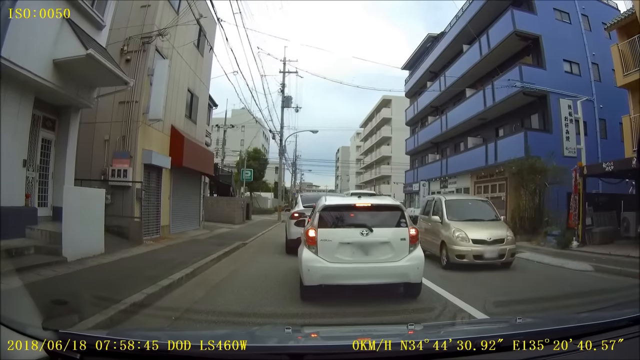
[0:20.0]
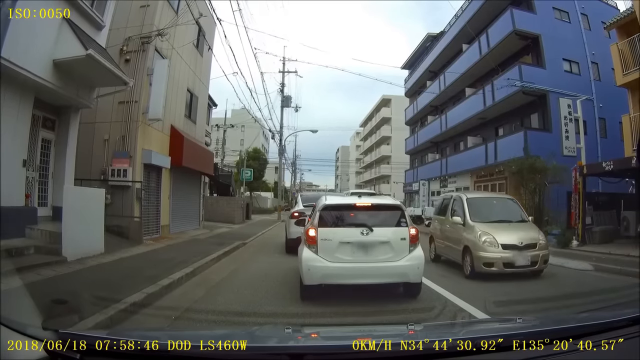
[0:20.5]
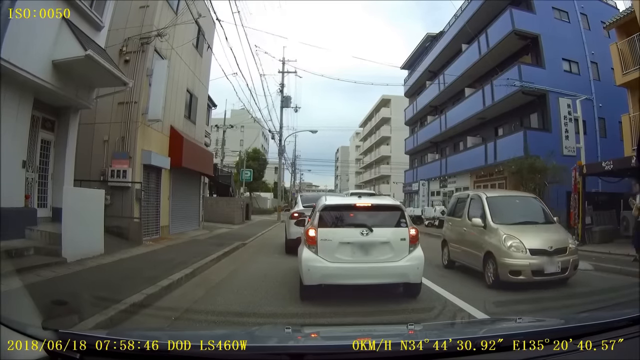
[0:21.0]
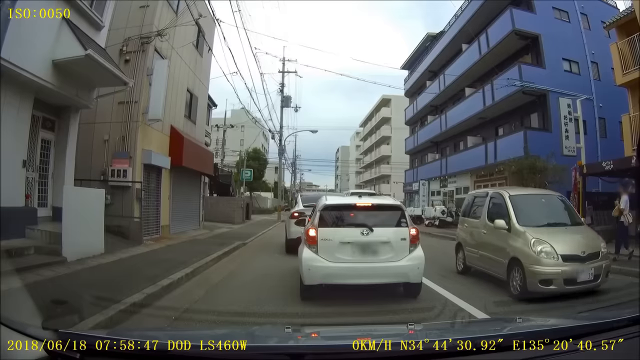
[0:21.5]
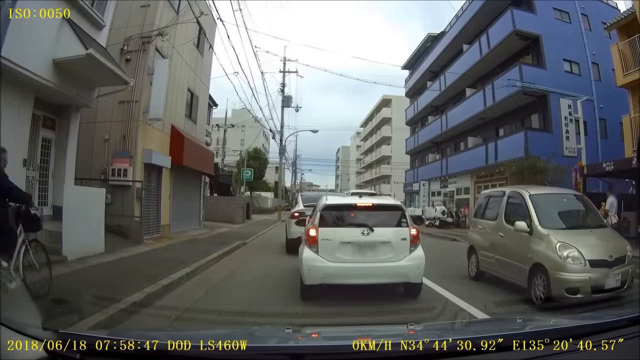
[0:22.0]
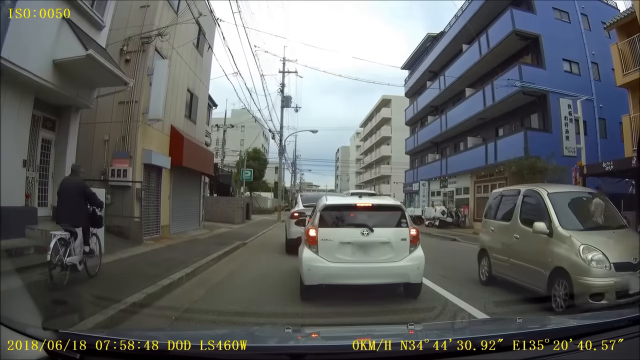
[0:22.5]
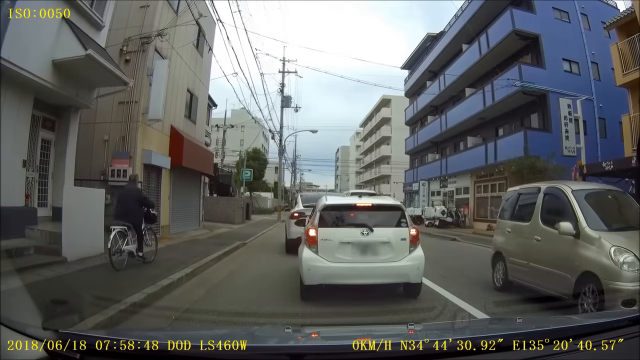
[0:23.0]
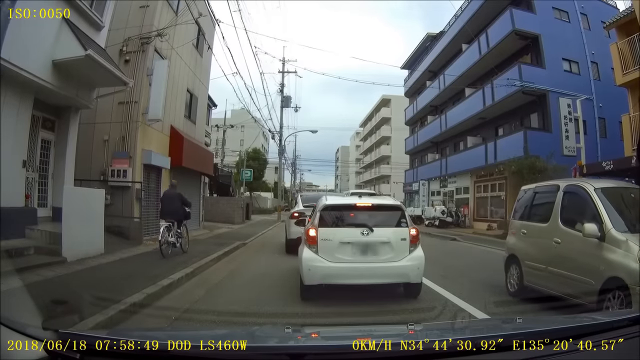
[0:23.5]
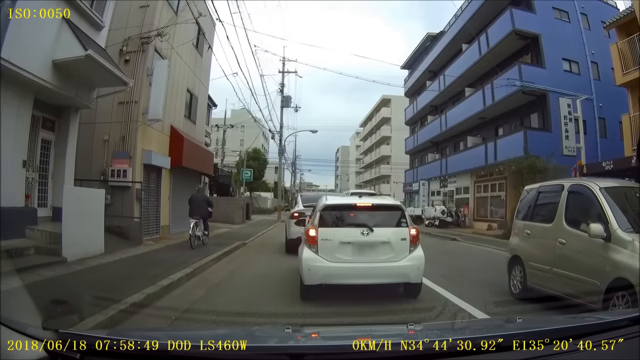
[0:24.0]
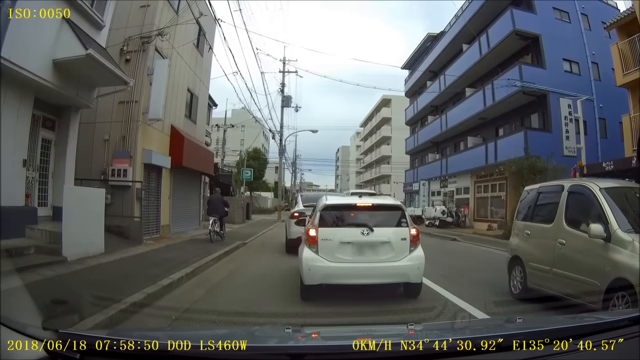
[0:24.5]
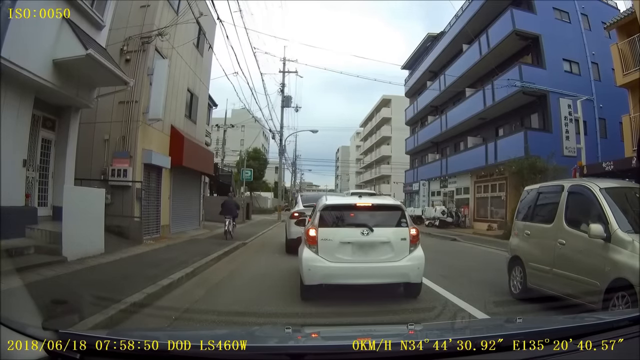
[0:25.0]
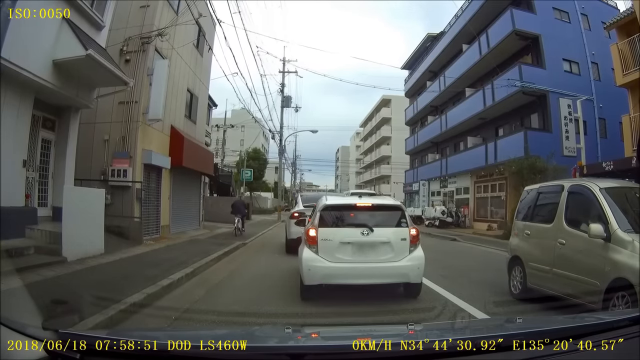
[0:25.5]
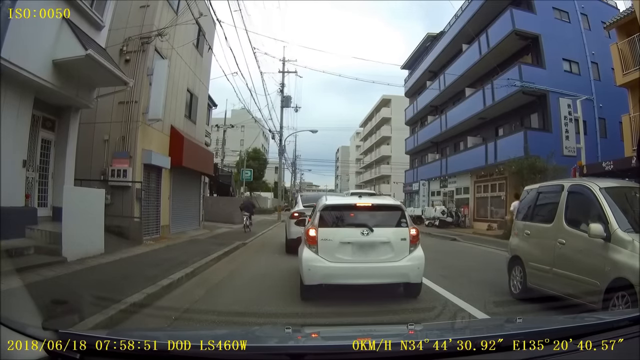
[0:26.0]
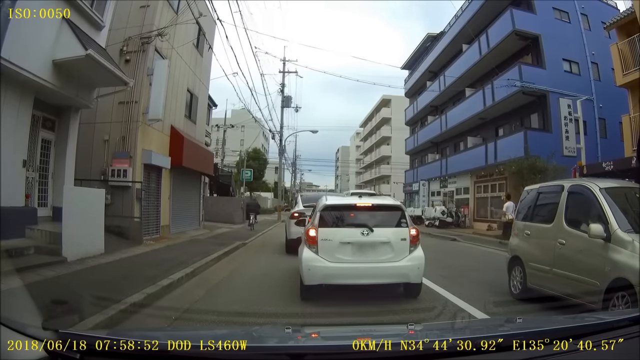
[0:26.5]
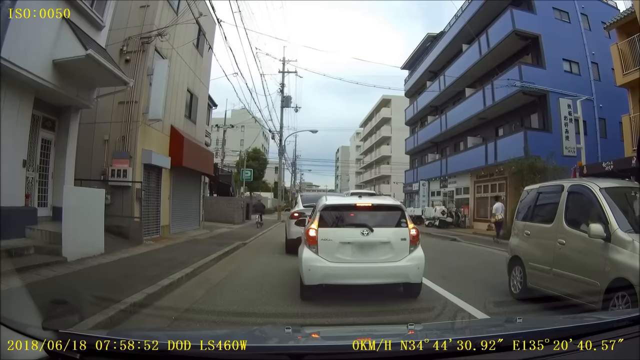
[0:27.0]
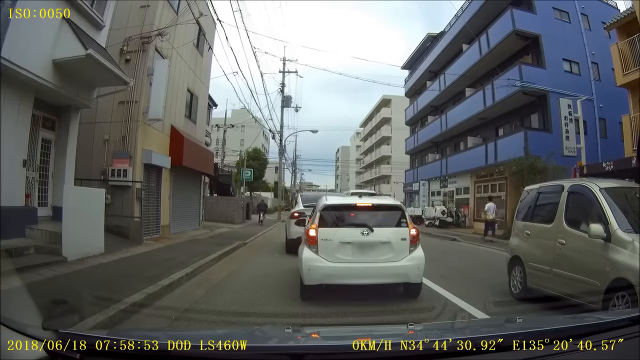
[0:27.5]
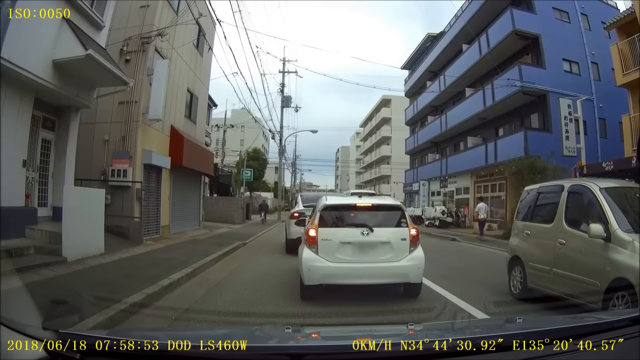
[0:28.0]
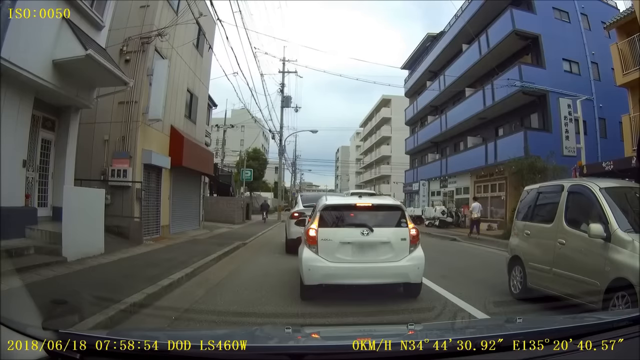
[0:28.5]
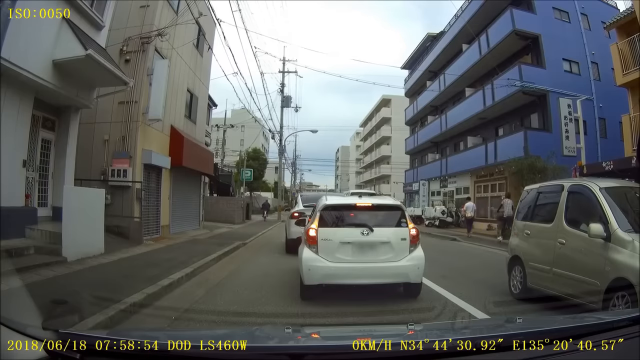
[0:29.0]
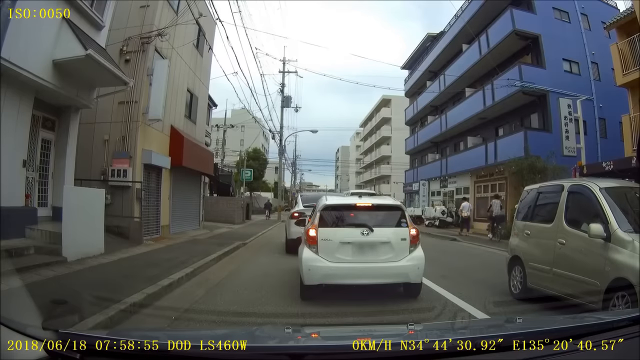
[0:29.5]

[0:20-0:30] Various cars are stuck in traffic in a region of Japan, unable to move because they are held in place in one area. The main car in the scene is white, and it cannot move because another car in front of it is blocking it. There are also signs written in Japanese, indicating the area is likely Japan or maybe China.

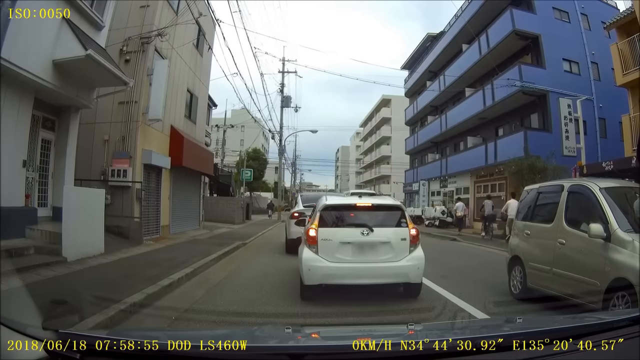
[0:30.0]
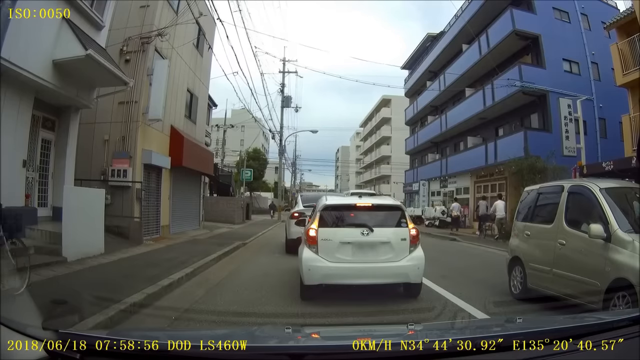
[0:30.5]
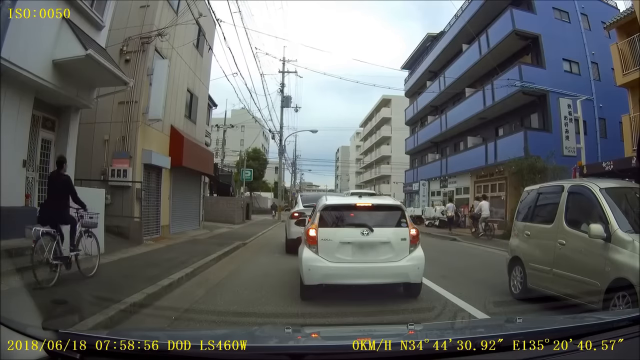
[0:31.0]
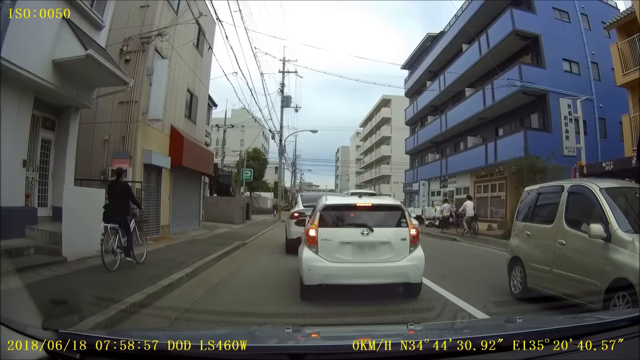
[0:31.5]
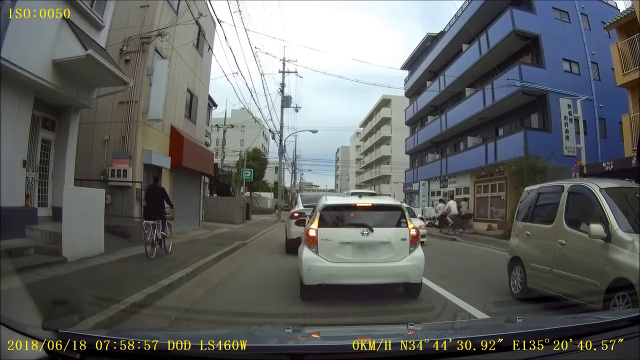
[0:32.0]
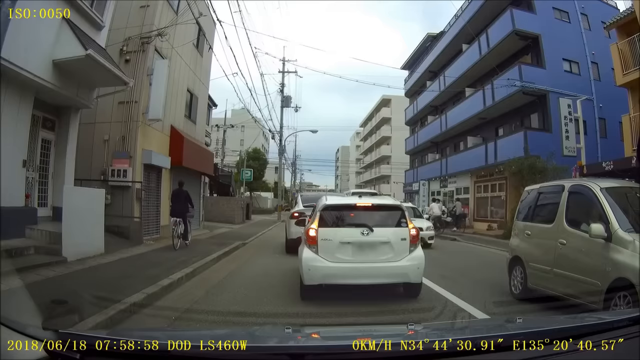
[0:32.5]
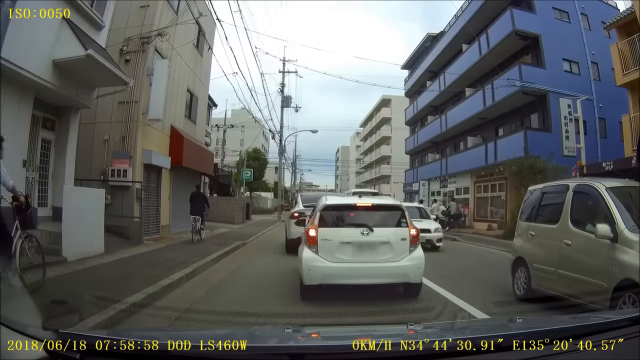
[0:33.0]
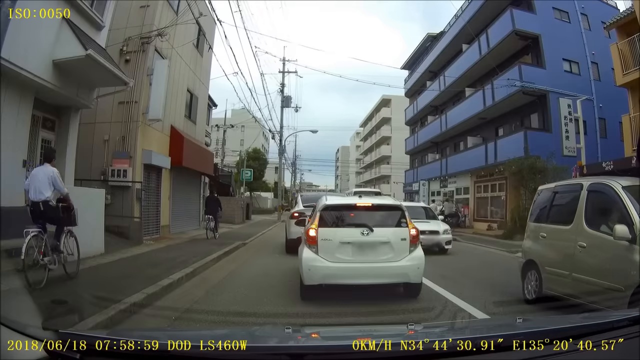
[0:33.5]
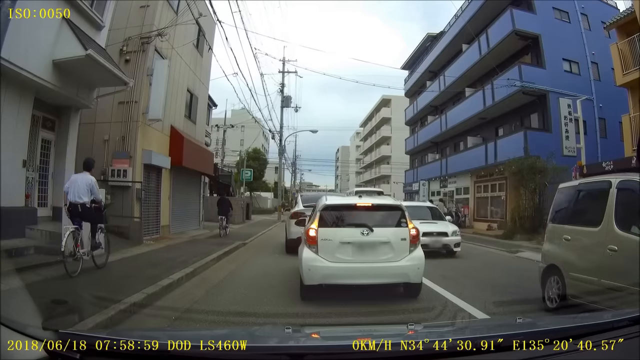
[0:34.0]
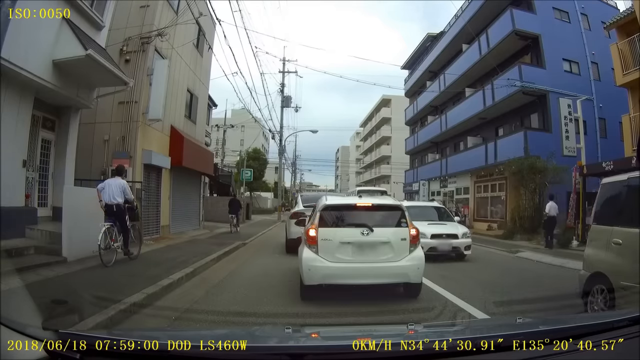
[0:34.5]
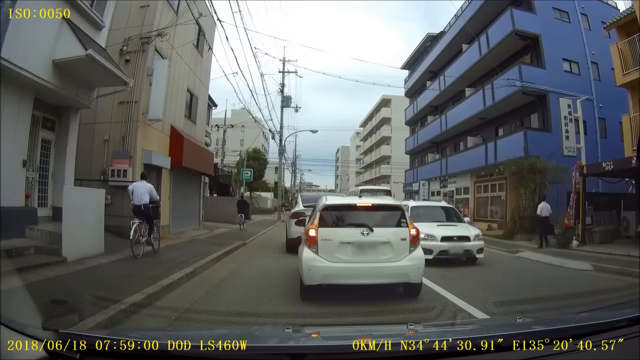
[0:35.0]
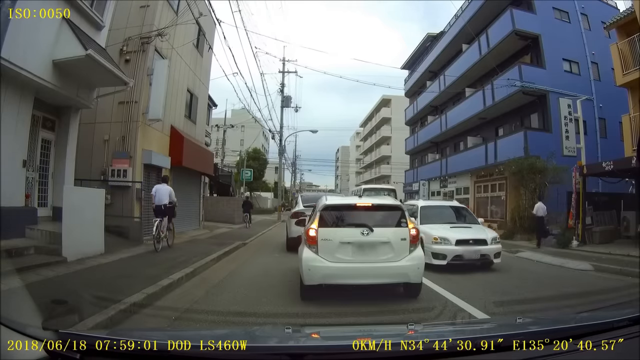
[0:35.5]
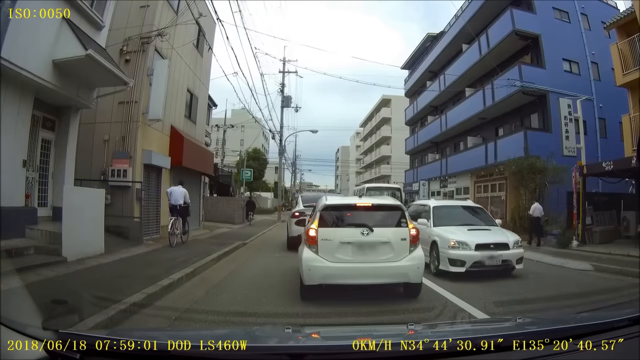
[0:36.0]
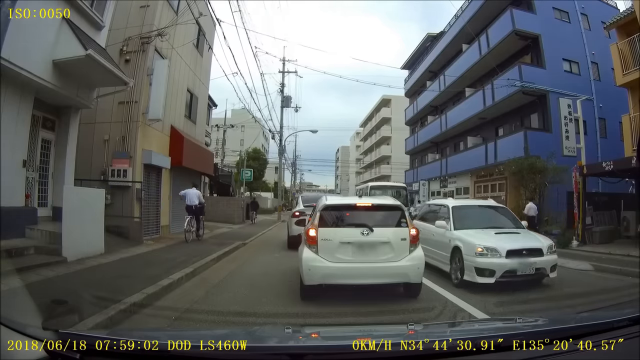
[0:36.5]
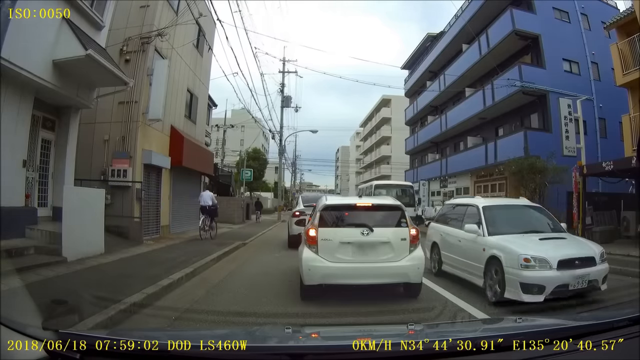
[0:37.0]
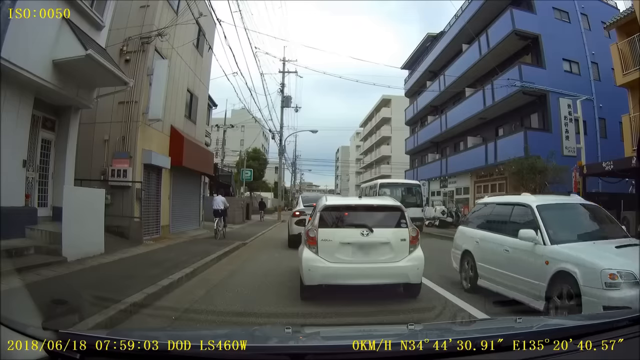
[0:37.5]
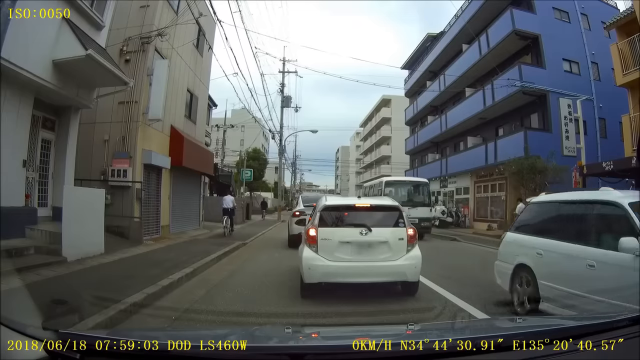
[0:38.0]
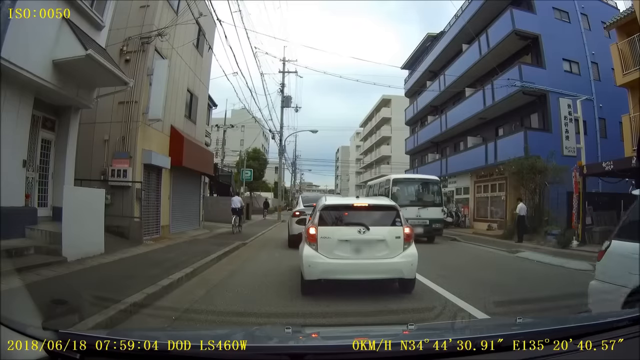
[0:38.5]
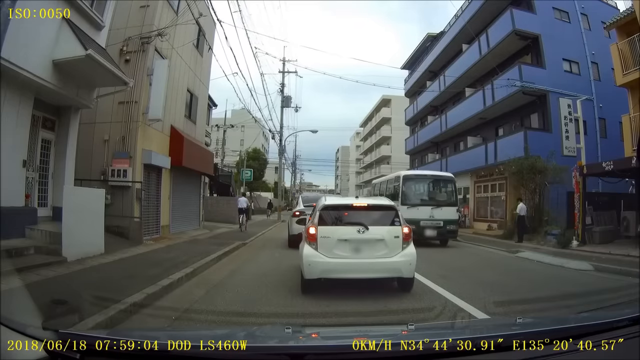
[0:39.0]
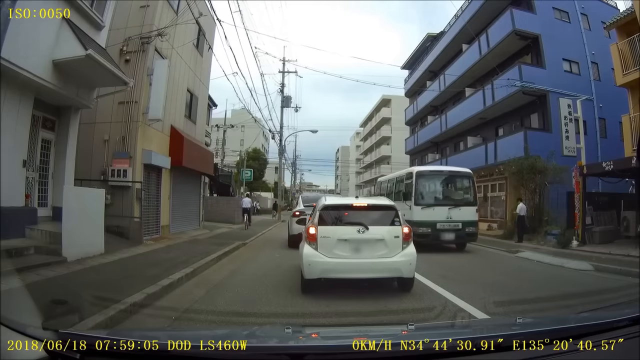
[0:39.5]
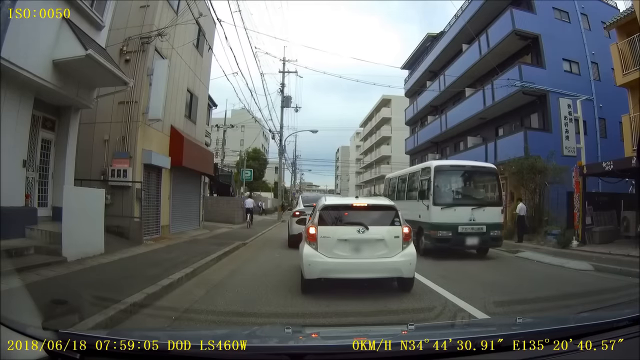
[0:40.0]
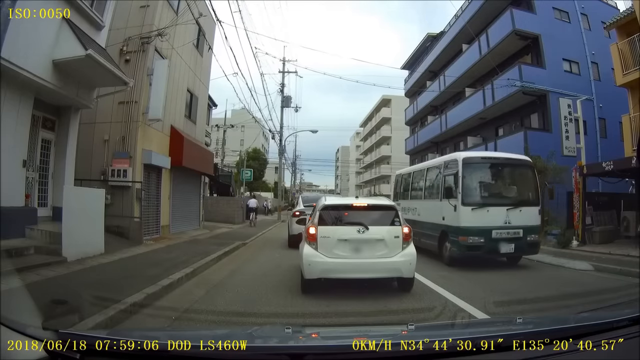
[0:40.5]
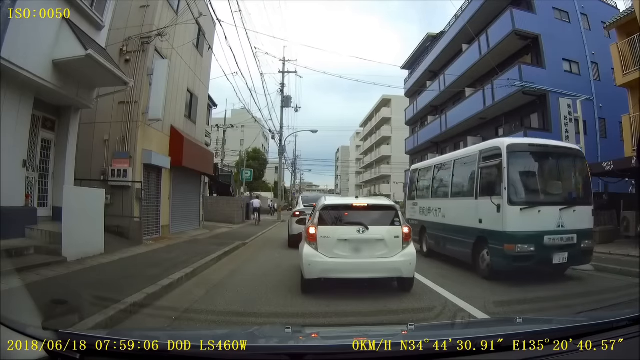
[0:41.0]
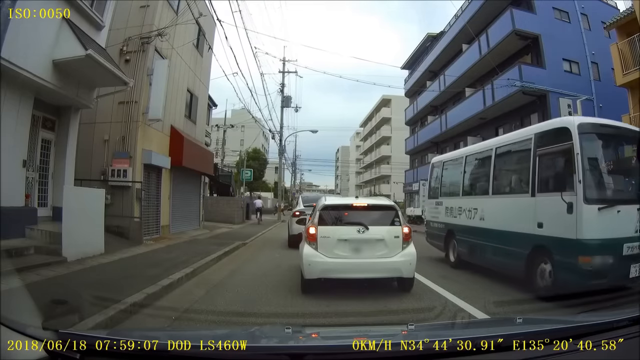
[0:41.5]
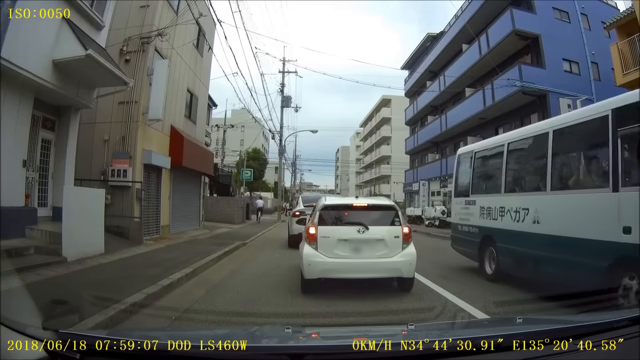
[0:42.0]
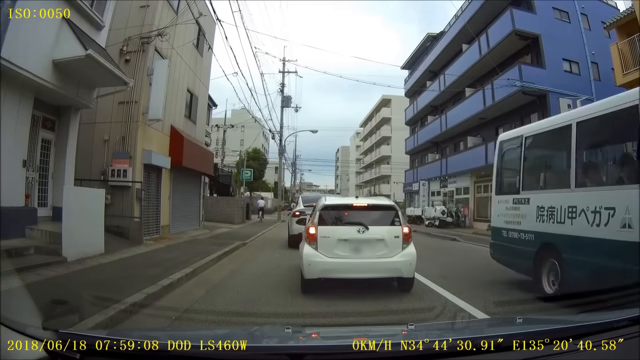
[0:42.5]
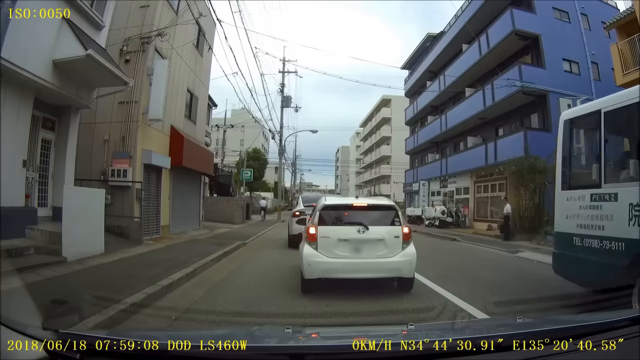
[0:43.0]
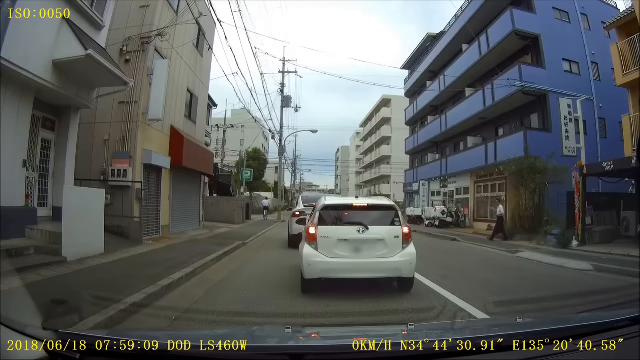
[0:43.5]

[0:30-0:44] Cars are stuck in what appears to be an Asian city, possibly in China or Japan, with Asian characters and text written across many of the buildings, including the buses and the sides of buildings. A clear bright blue building stands on the right side of the image, with patios sticking out onto the road. The road holds many cars in various light shades of color, none of them moving because they are stuck in traffic.